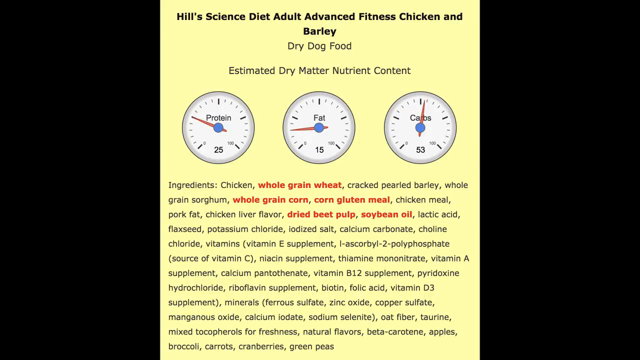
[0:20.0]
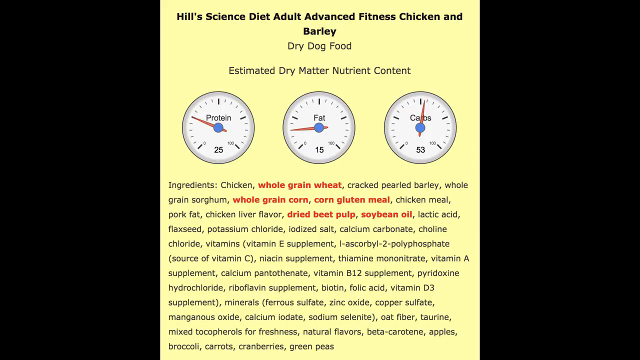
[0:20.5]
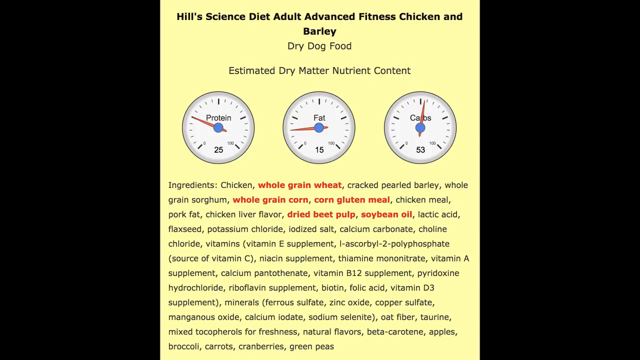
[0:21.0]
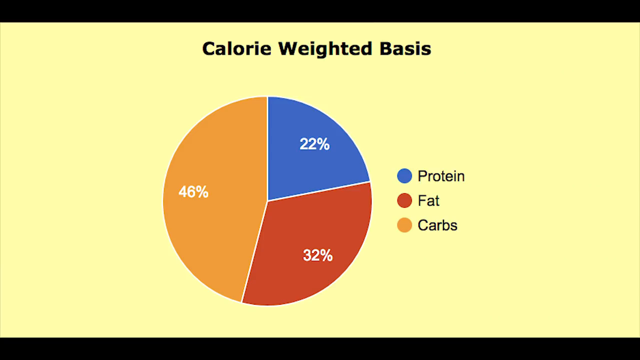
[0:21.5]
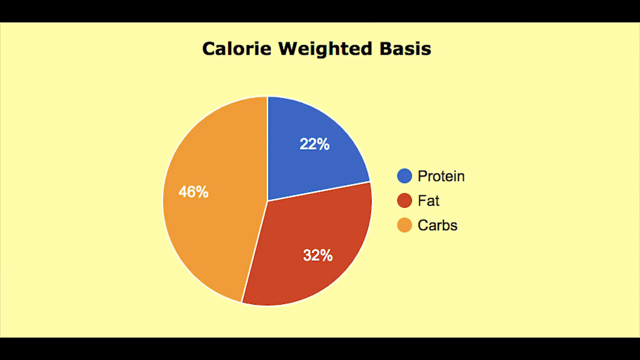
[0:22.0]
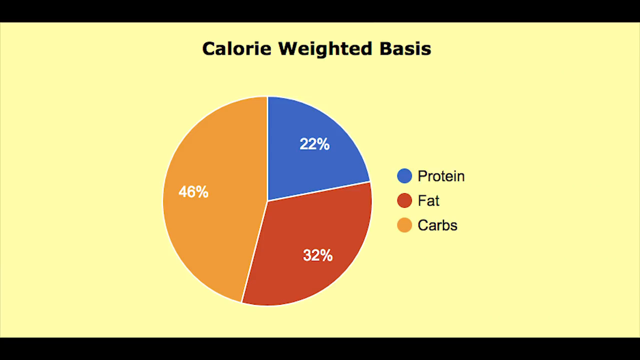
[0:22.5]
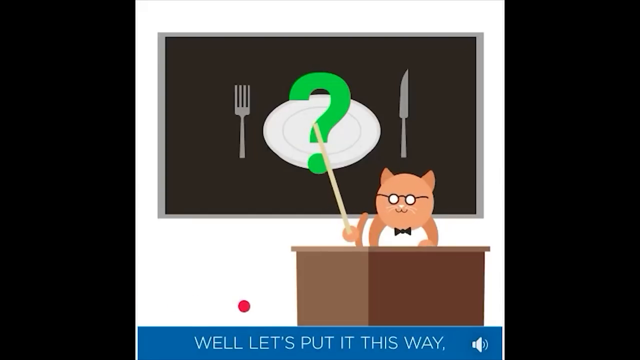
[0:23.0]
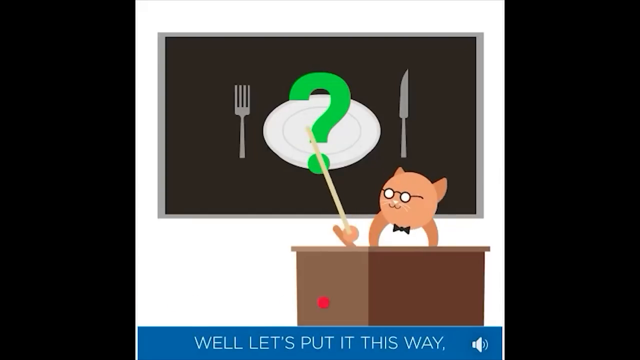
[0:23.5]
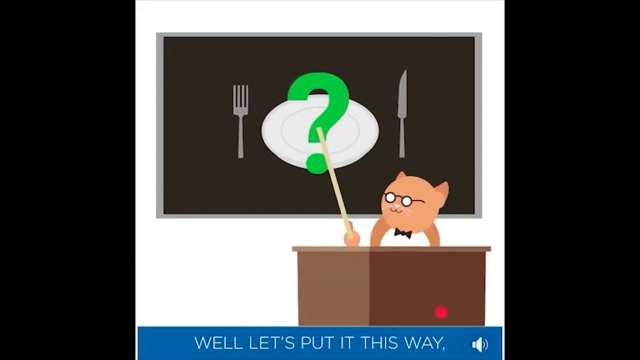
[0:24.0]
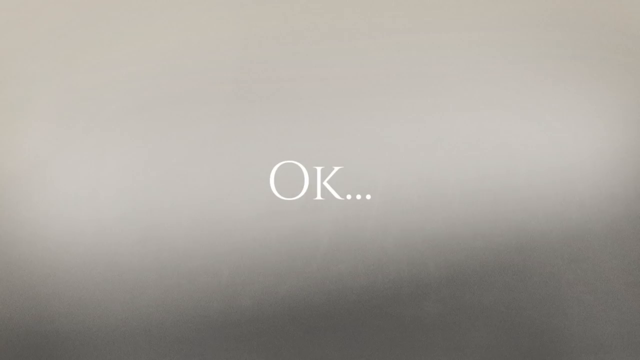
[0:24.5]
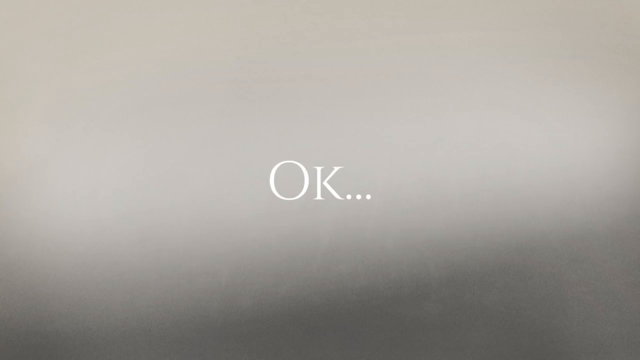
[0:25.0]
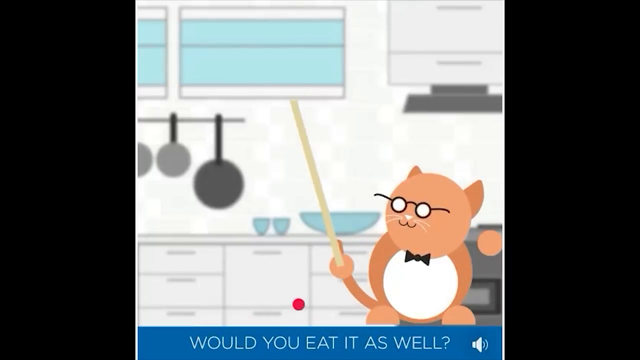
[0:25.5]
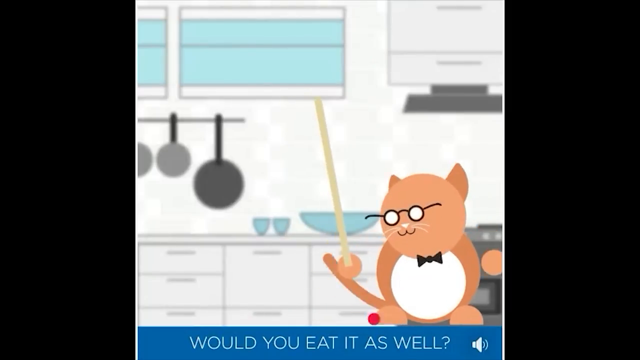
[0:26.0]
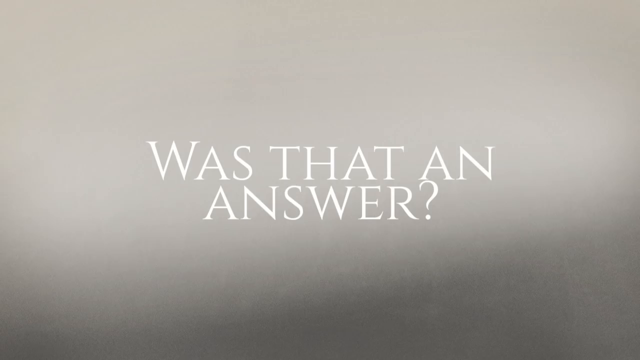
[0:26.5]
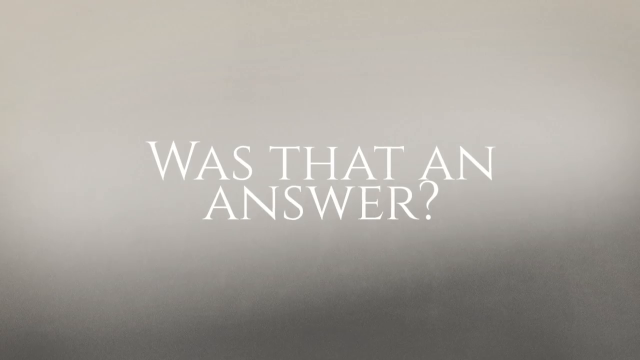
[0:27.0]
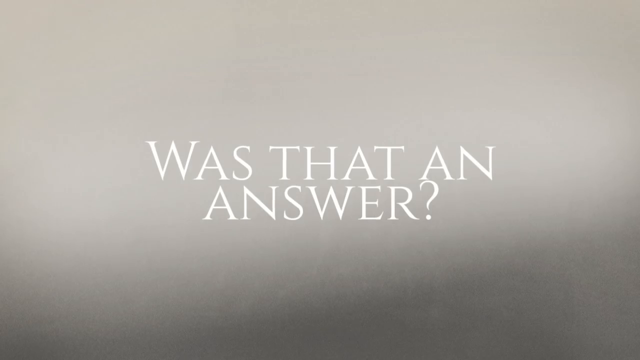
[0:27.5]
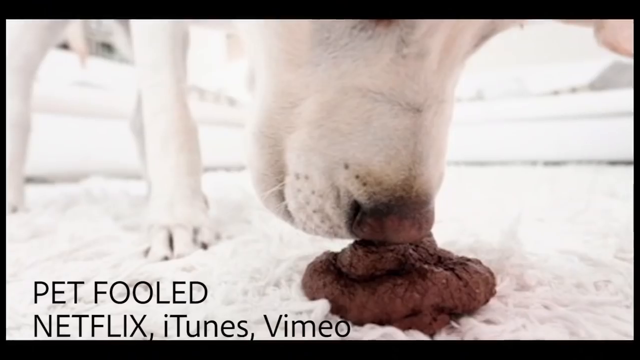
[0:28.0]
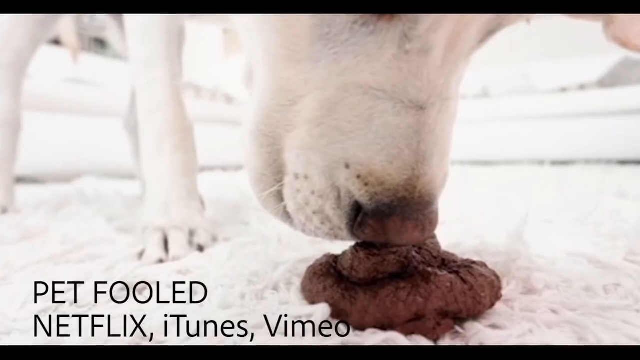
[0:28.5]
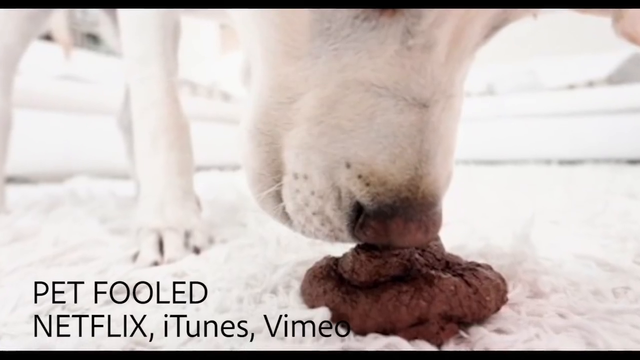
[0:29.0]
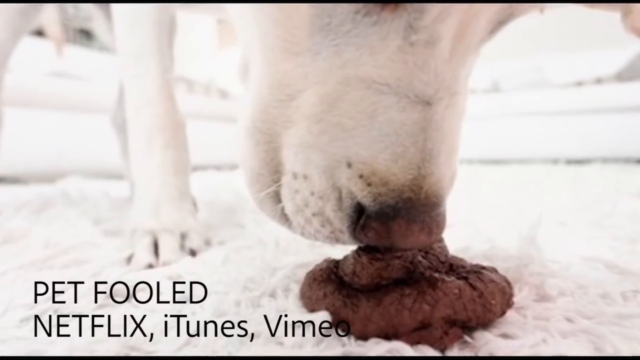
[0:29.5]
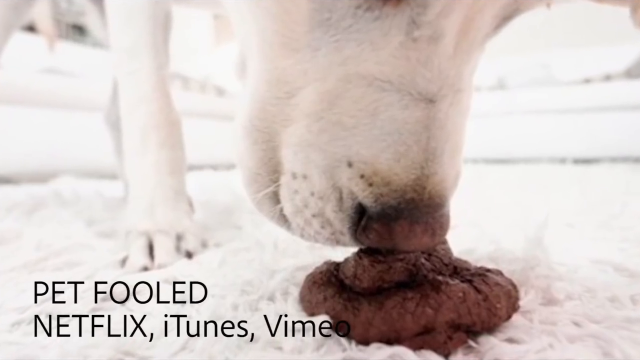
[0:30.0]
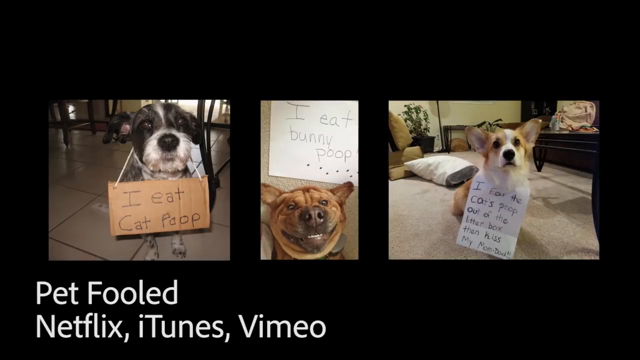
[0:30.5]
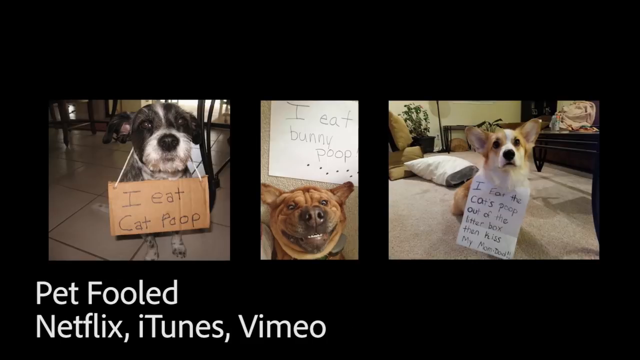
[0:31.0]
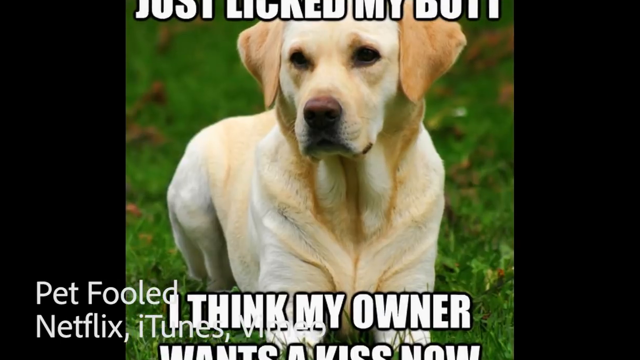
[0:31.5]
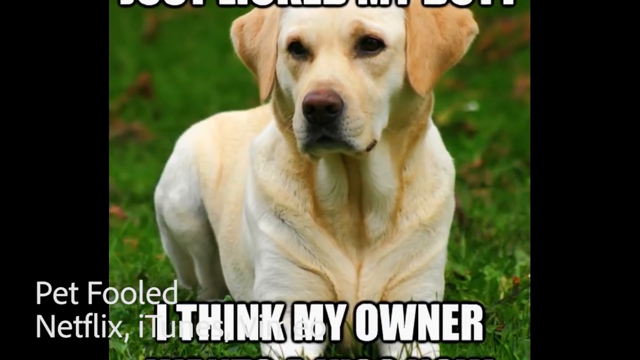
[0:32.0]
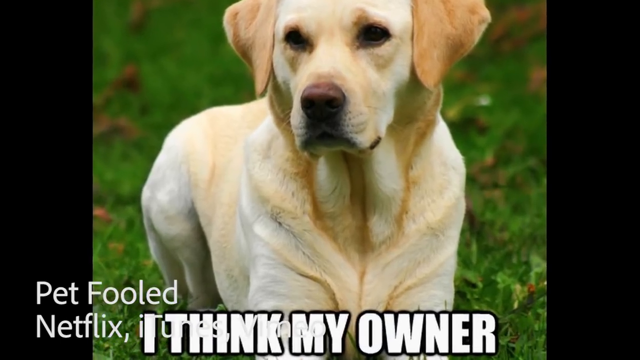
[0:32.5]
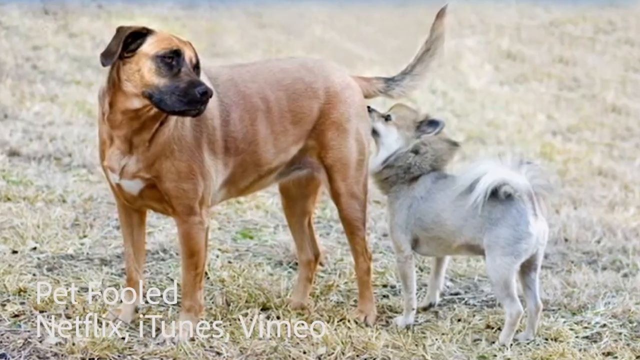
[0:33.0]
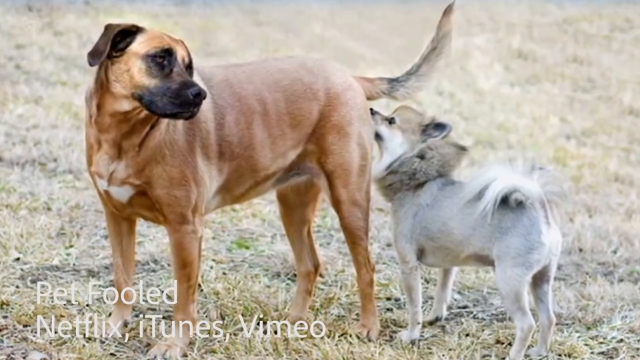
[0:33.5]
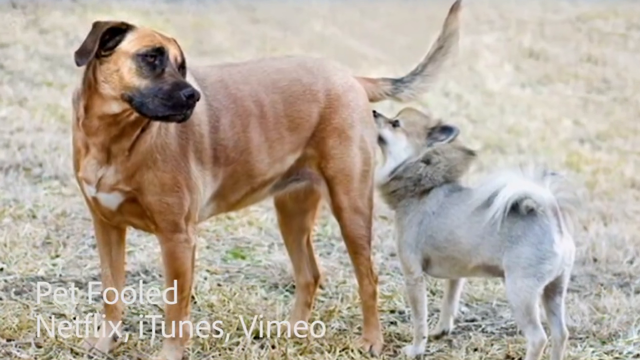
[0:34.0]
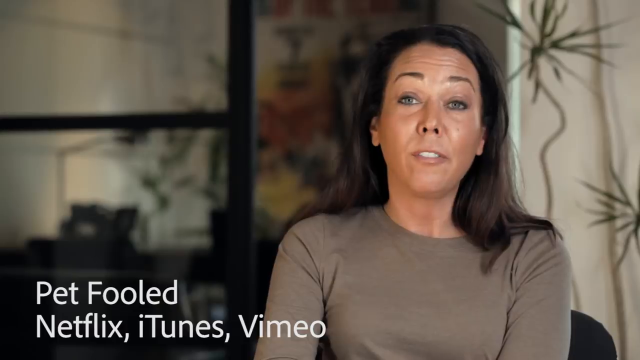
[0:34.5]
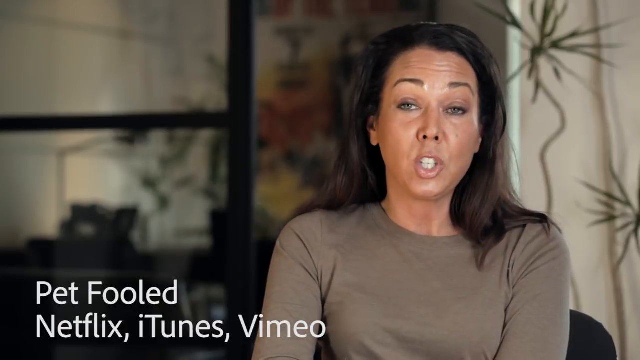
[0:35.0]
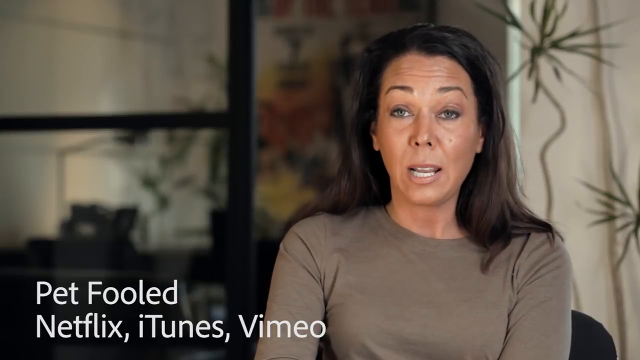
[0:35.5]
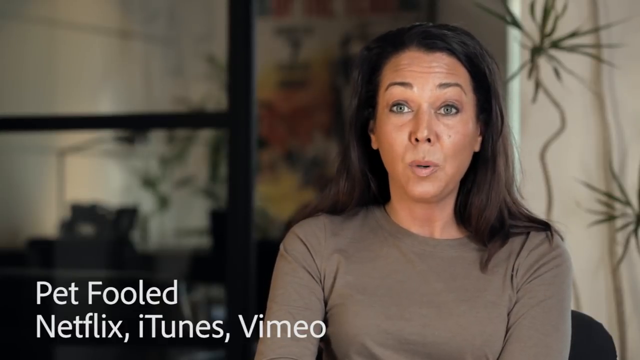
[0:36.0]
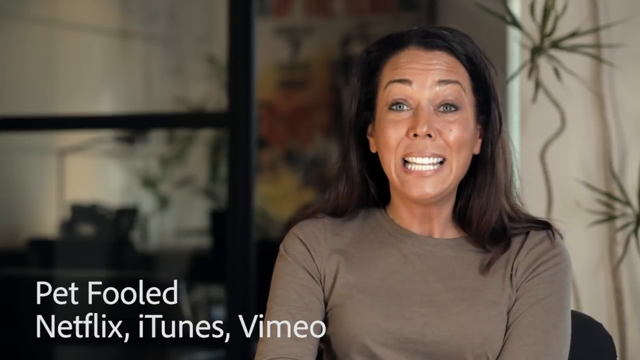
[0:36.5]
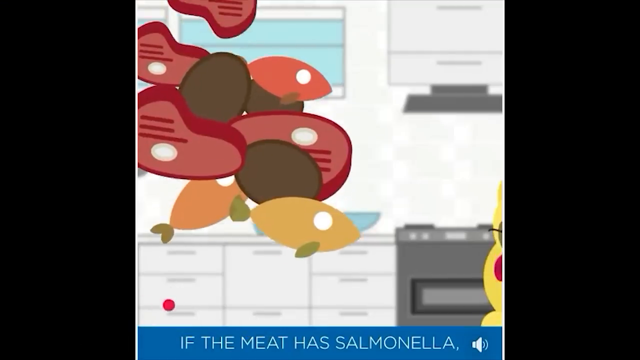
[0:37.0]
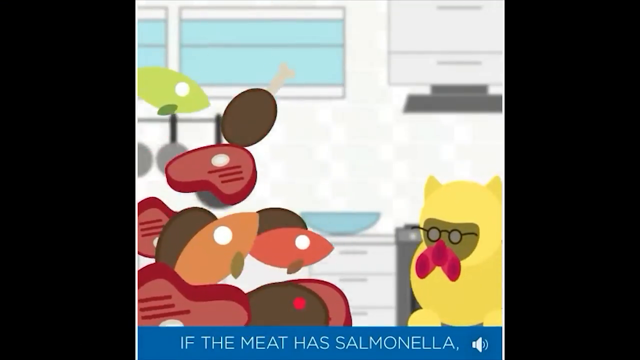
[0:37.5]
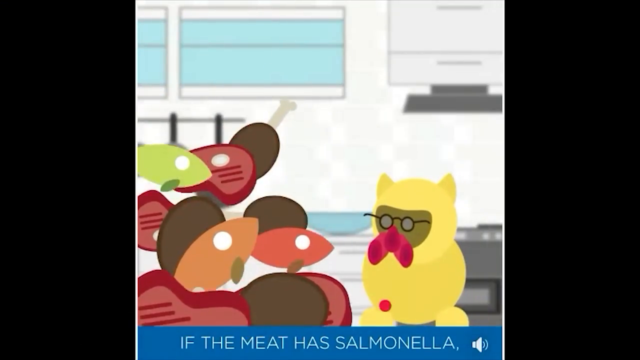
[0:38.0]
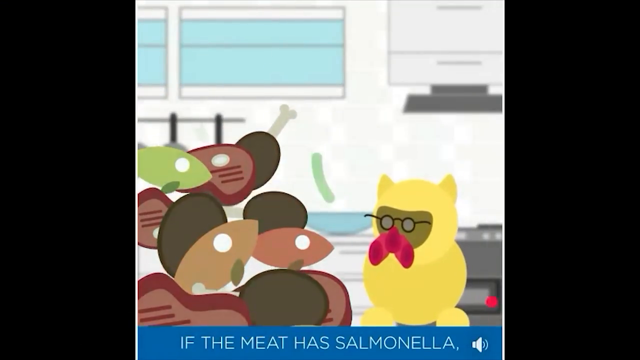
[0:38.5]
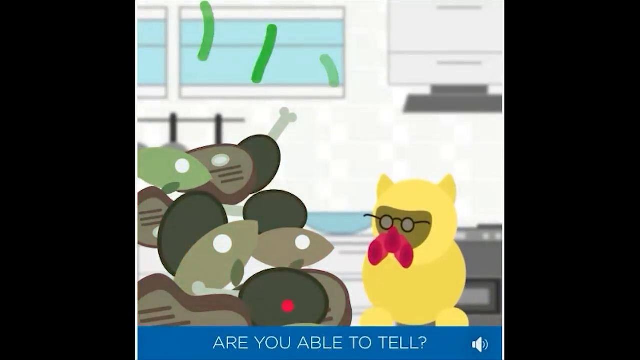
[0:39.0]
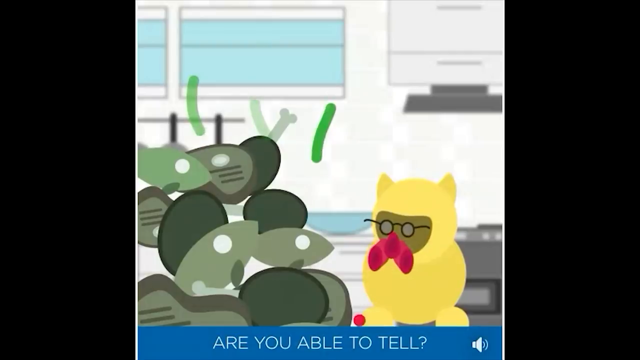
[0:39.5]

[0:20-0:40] A yellow screen of information appears, covering the protein, fats and carbs in Hill's Science Diet, Adult Advanced Fitness, Chicken and Barley, Dry Dog Food, with a whole list of ingredients, some of them highlighted in red. Next comes a pie chart with three sections: orange for carbs at 46%, red for fat at 32%, and blue for protein at 22%. The video quickly cuts to the cat in the same classroom setting with the blackboard in the background, and the words "okay..." appear on the screen. There is a quick image of another cartoon with the same cat, and then, on the same beige-ish background, the text "was that an answer?" appears. Various clips of dogs follow, and a lady talks to the camera.